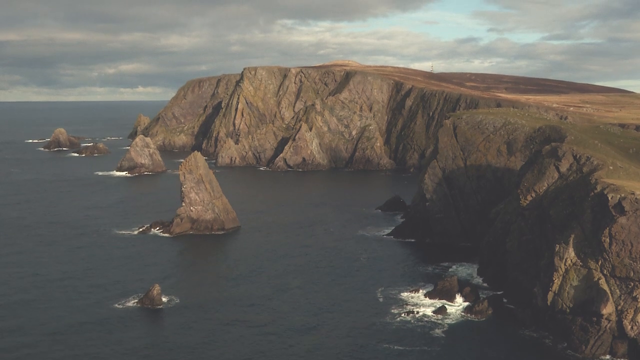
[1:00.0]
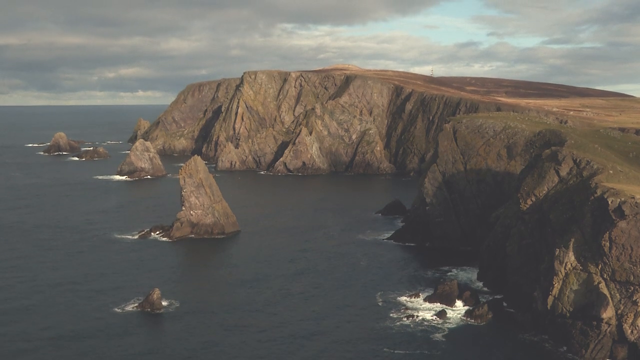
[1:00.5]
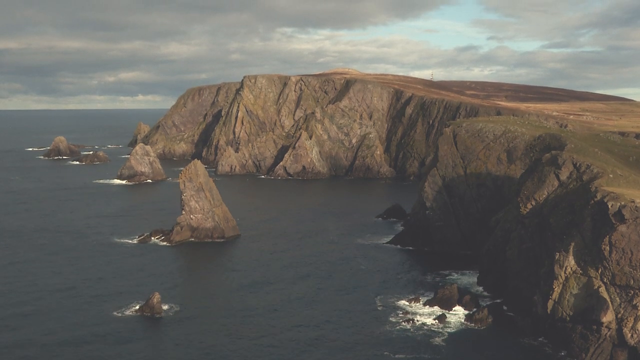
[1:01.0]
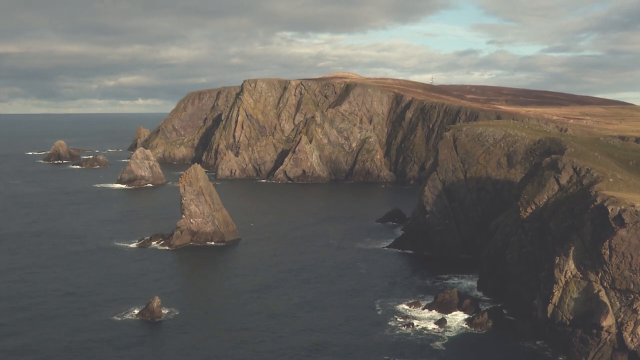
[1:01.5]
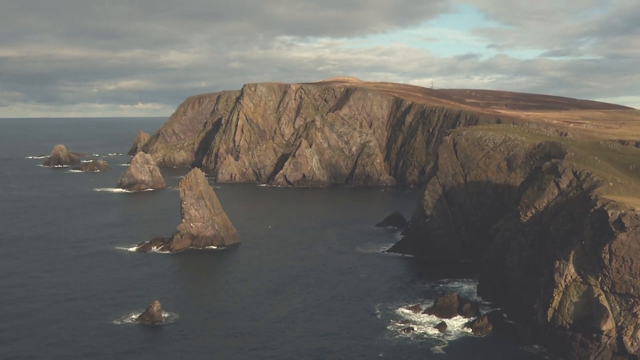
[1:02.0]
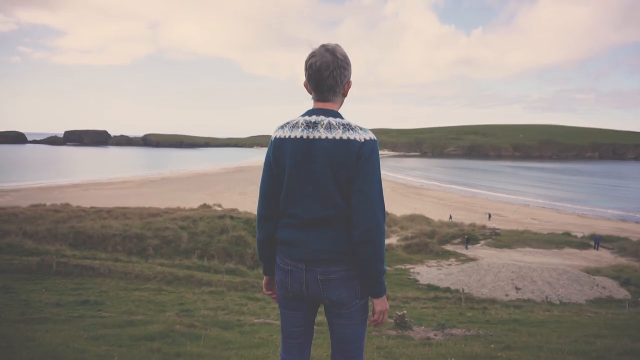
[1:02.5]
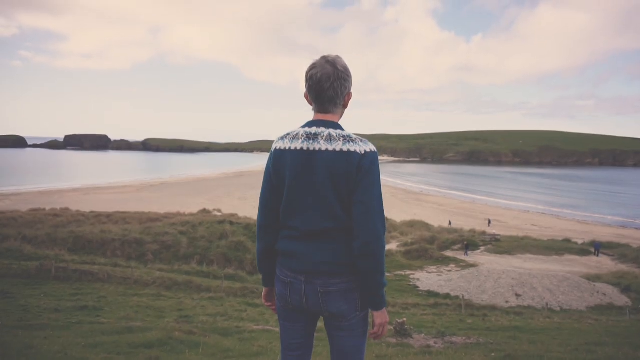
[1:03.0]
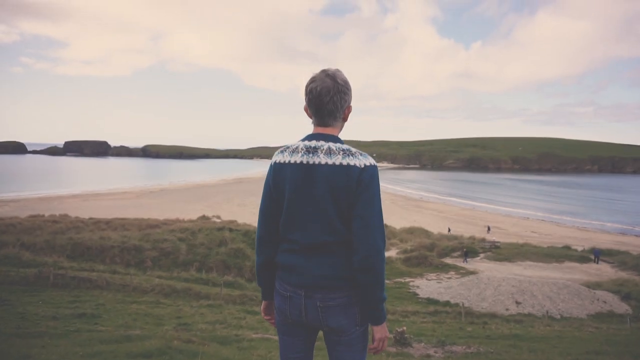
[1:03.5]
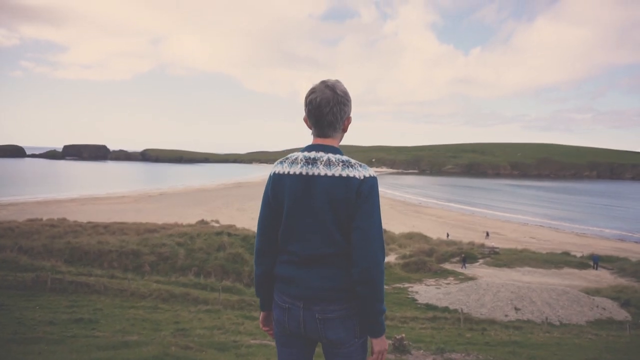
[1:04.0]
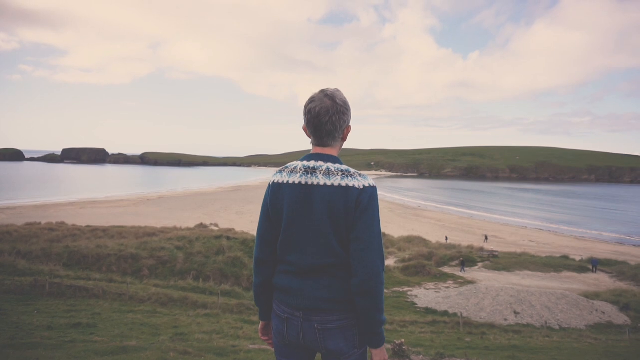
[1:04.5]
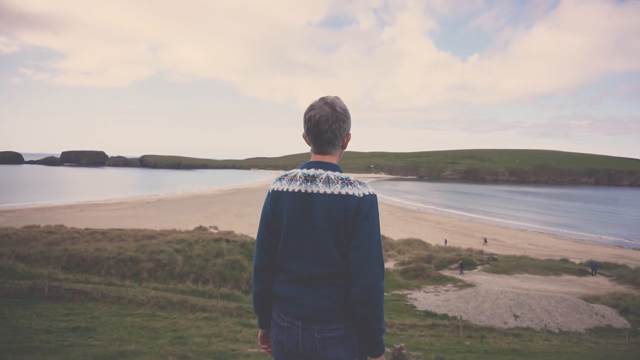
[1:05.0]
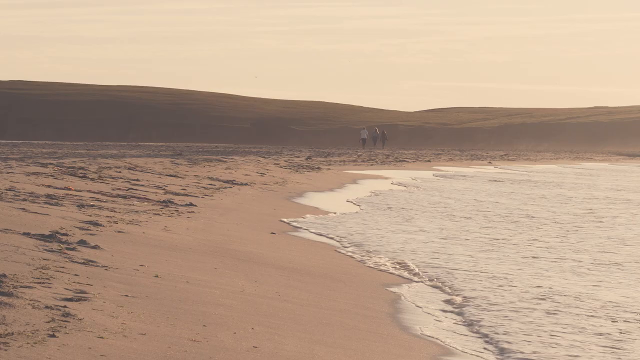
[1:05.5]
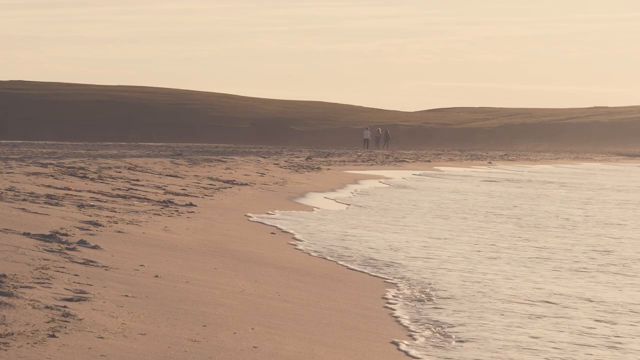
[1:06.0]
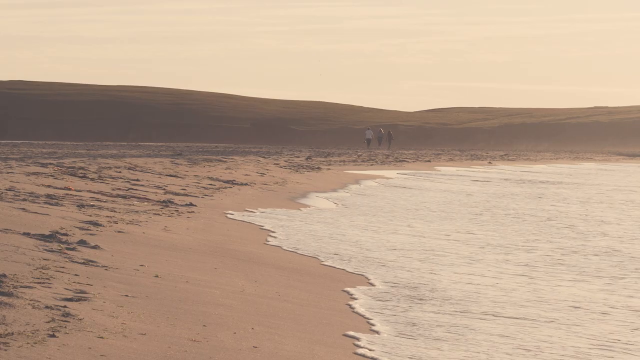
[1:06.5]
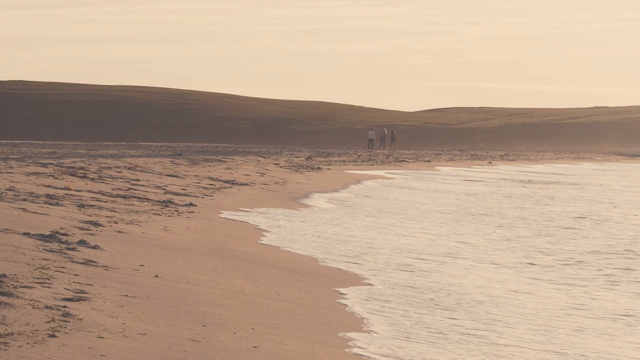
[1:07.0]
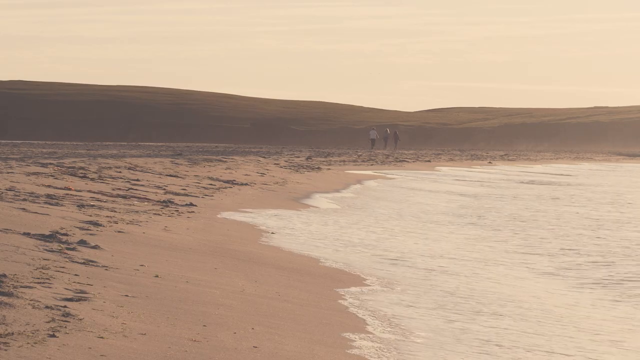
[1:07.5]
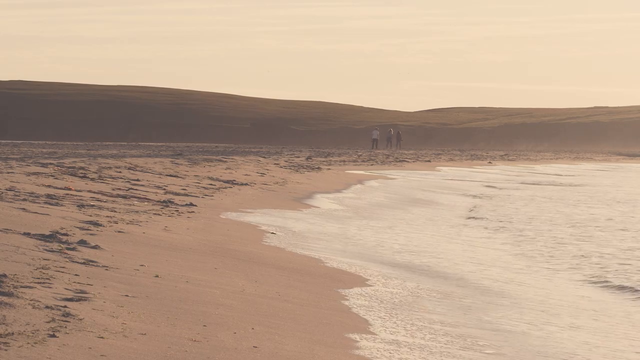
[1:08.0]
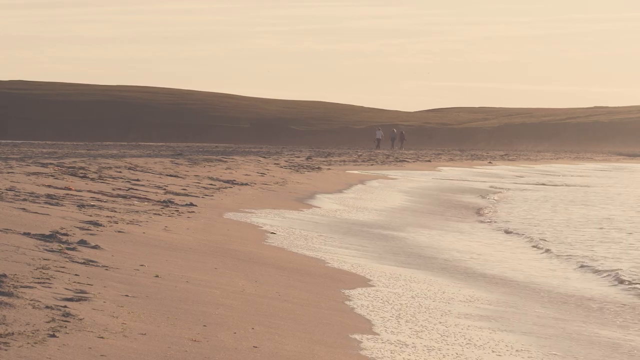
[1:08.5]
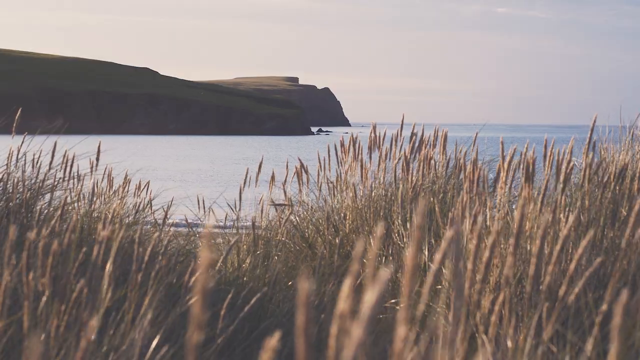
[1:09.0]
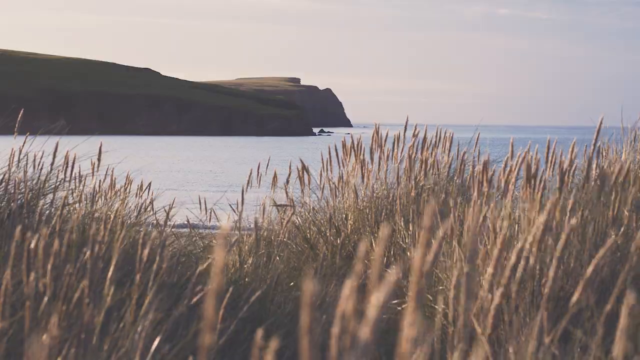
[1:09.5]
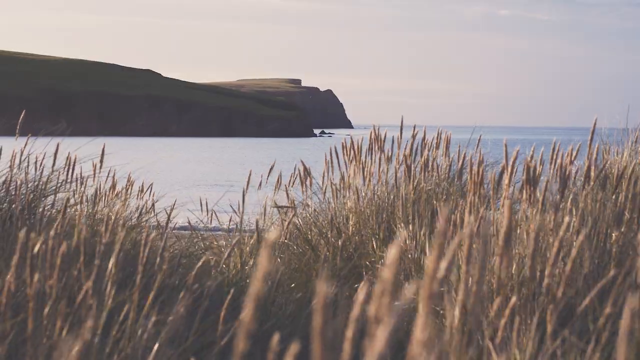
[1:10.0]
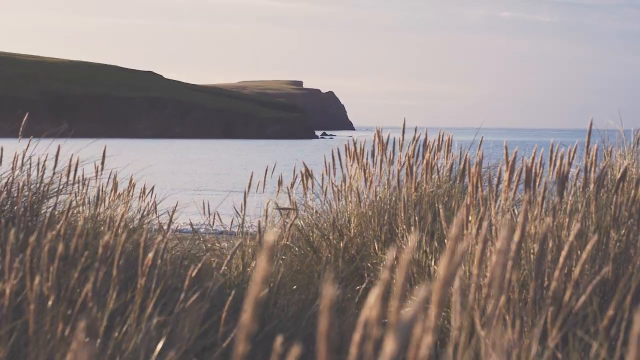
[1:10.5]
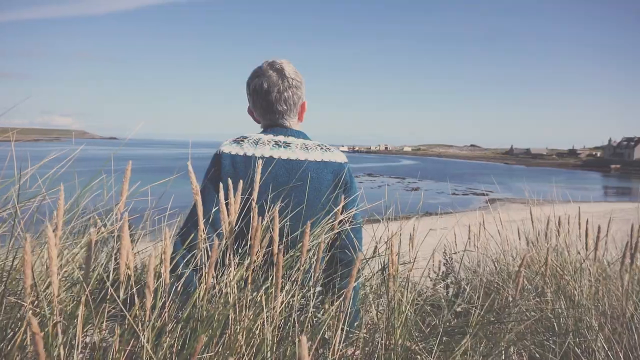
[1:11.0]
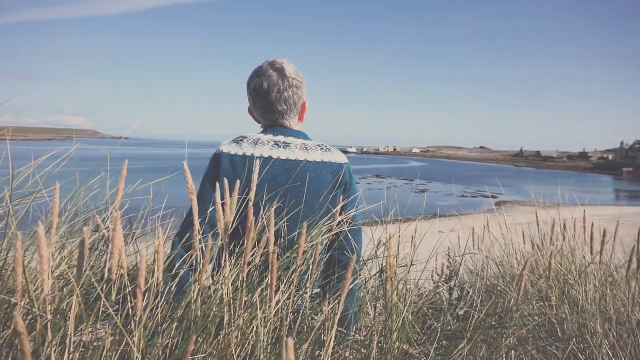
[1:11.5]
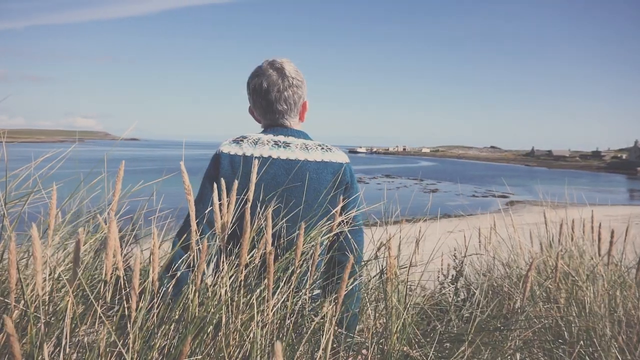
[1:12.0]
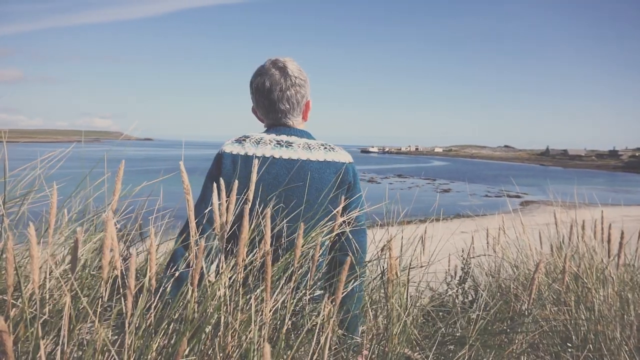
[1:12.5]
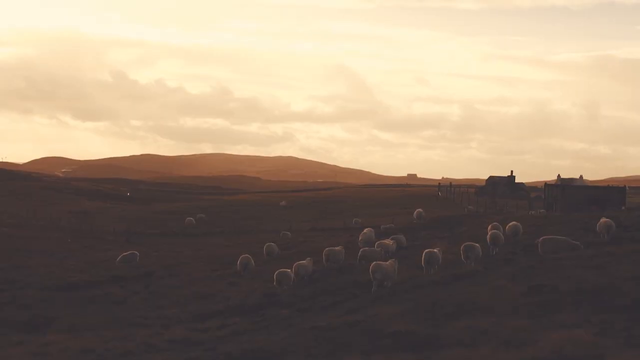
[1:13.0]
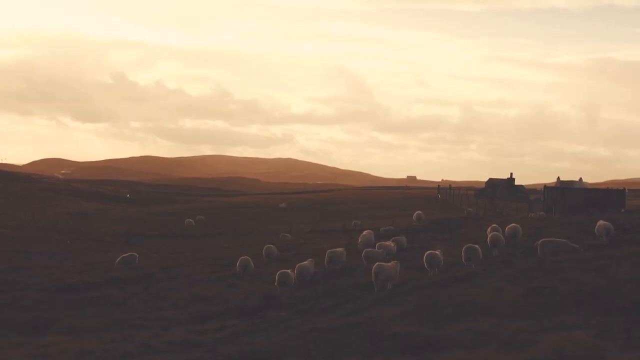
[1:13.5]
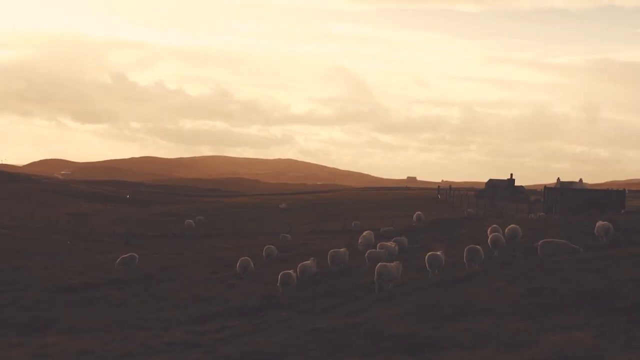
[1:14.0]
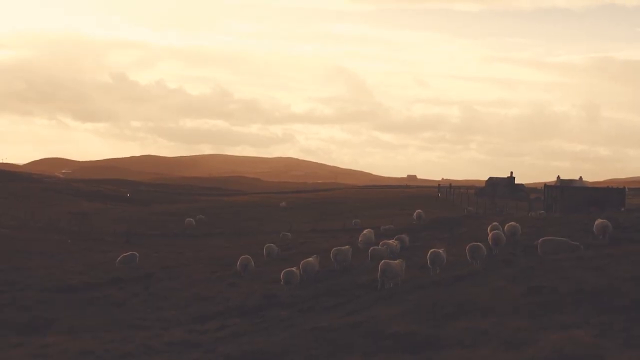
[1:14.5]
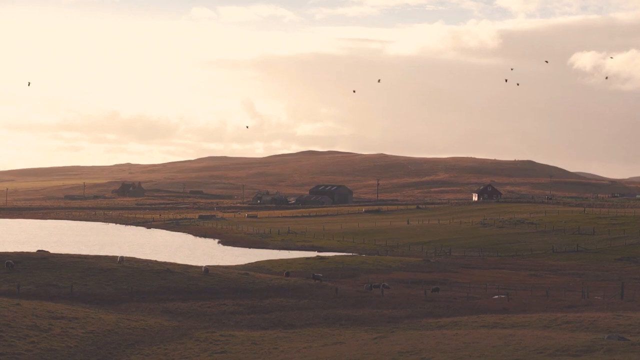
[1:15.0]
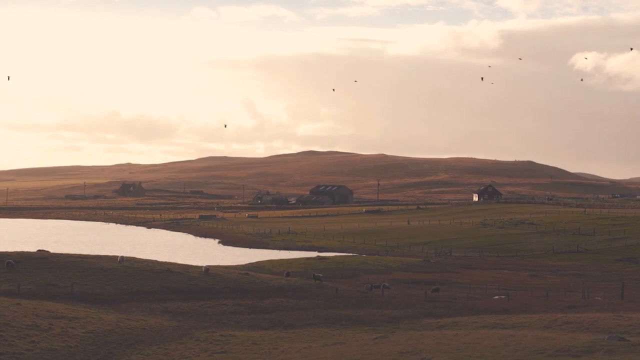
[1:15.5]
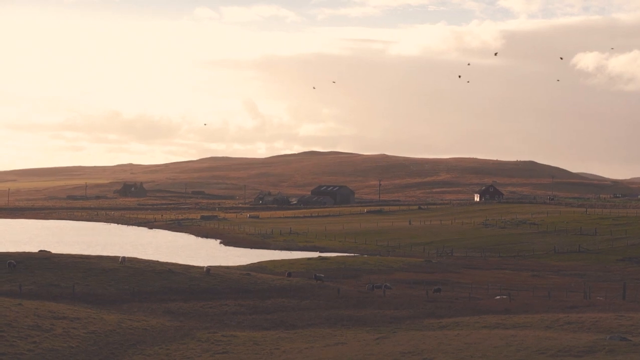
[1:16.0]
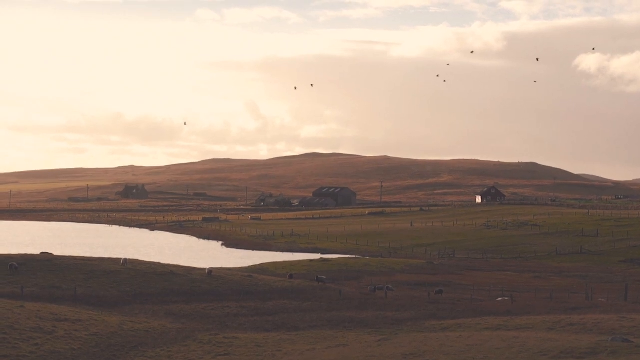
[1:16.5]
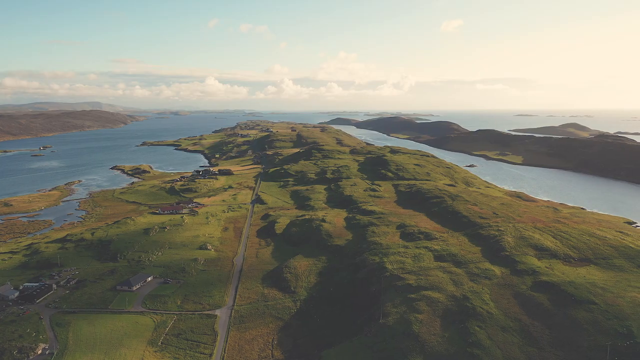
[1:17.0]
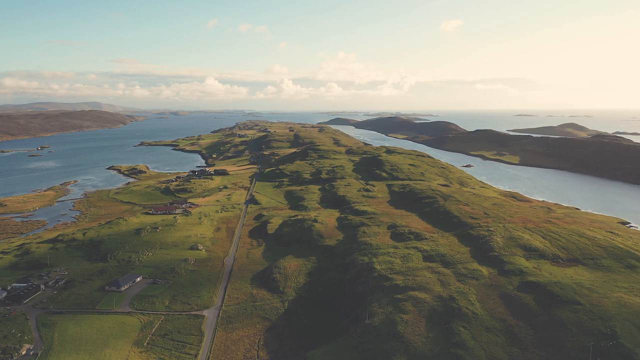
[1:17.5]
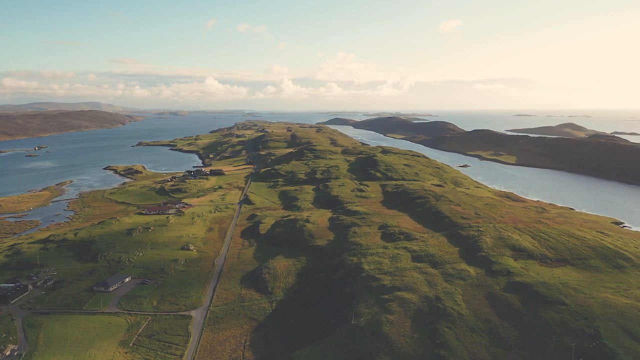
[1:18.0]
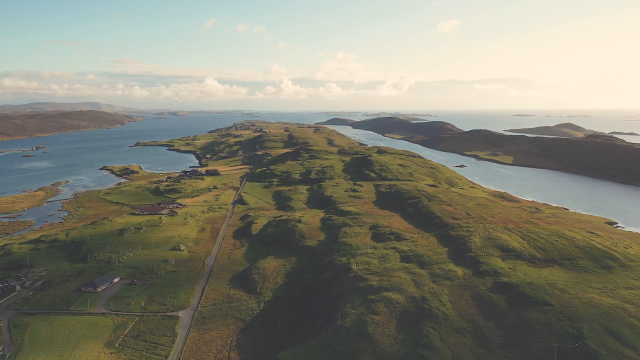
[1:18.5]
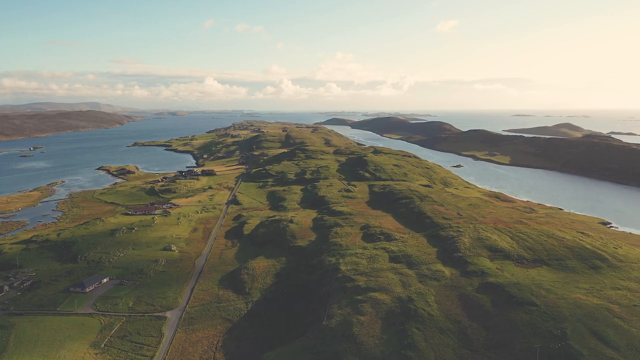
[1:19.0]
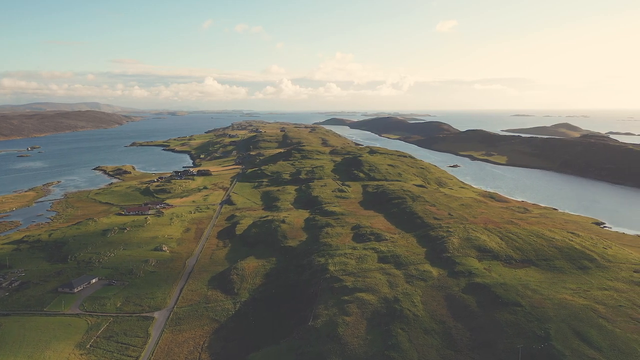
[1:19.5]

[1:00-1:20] A landscape view of the cliff sides on Shetland shows much darker weather, with the cliff sides and the sea looking particularly dark. The old woman stands with her back to the camera, wearing a blue jumper with a white stripe near the collar and black patterns knitted into it. She faces a beach with sand and grass, surrounded by blue ocean, under a blue sky with clouds. A wide shot shows a sandy beach with cliffs in the background and waves approaching the shore on the left. Next is a landscape with lots of grass and what look to be reeds, with blue ocean and a cliffside in the background. The video quickly cuts back to the old woman, then to a landscape with lots of sheep walking round a farm. Three more scenes of the Shetland Islands follow, with birds flying across the sky from right to left and lots of buildings in the background on a wide open rural area. Finally, another bird's-eye view shows the landscape looking greener than the previous images: green rural land surrounded by blue ocean under a clear blue sky with very few clouds.